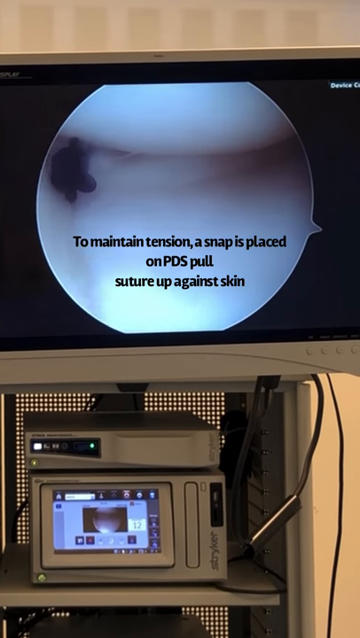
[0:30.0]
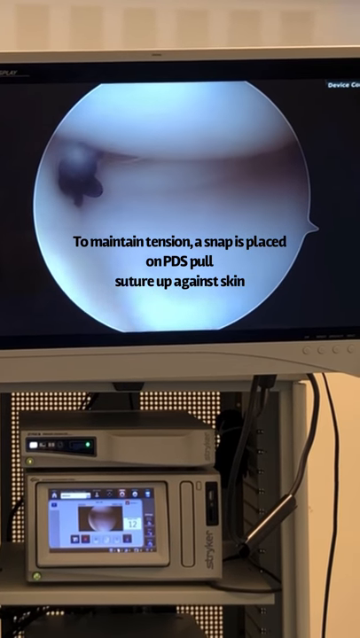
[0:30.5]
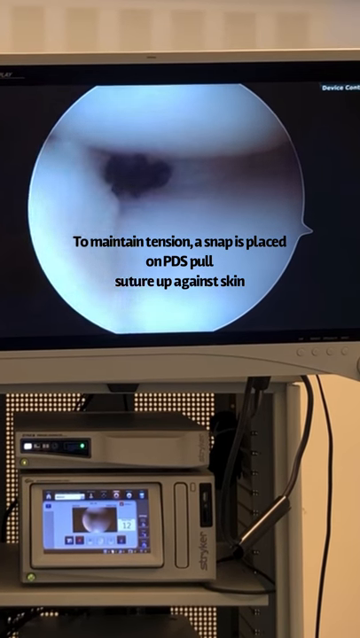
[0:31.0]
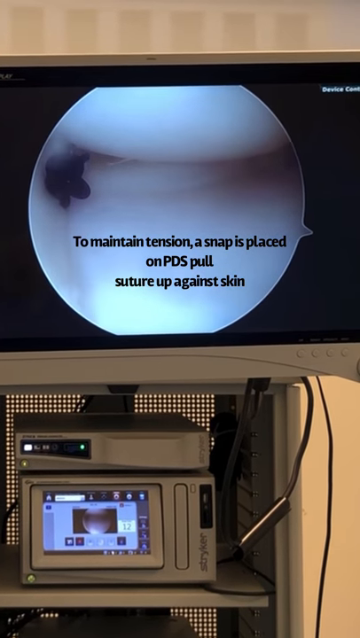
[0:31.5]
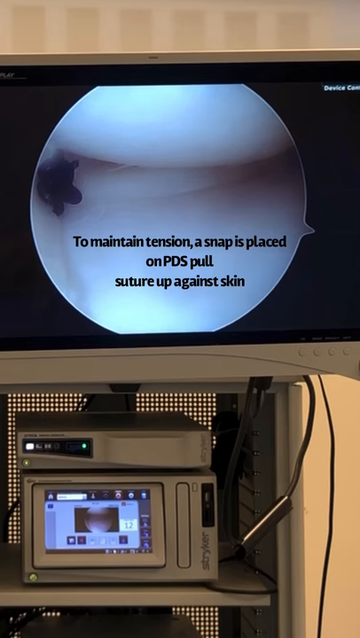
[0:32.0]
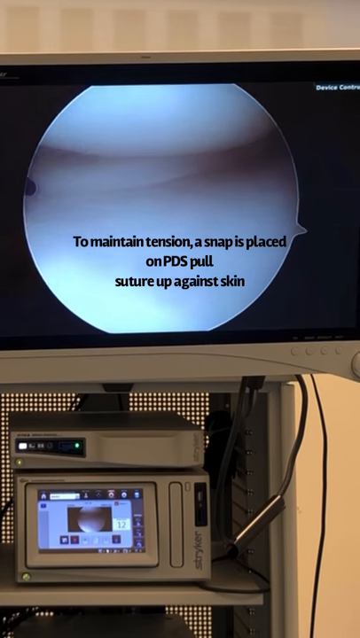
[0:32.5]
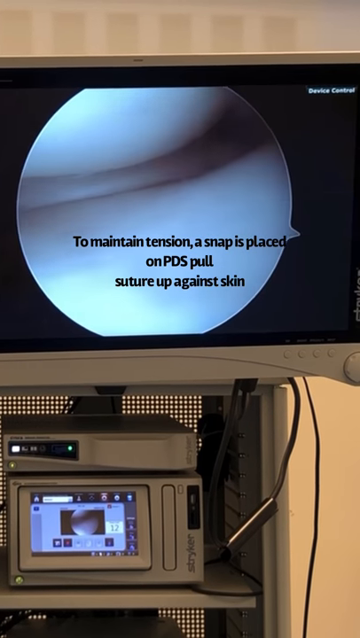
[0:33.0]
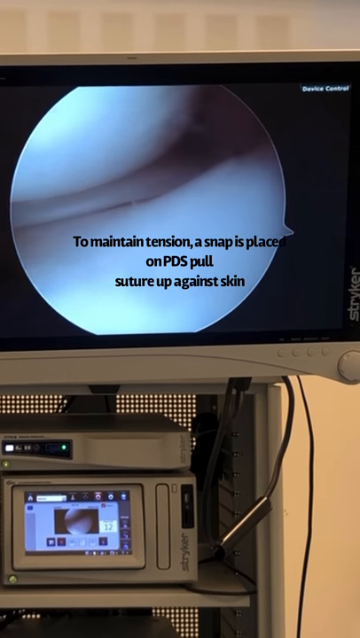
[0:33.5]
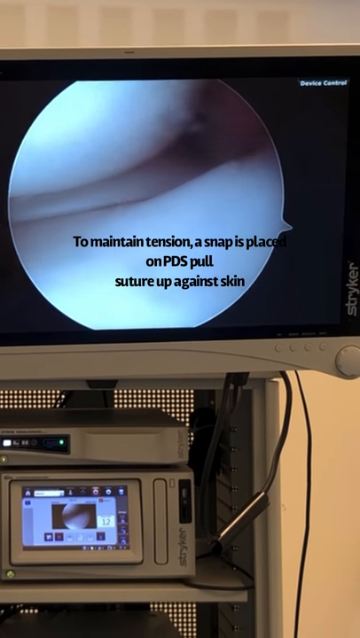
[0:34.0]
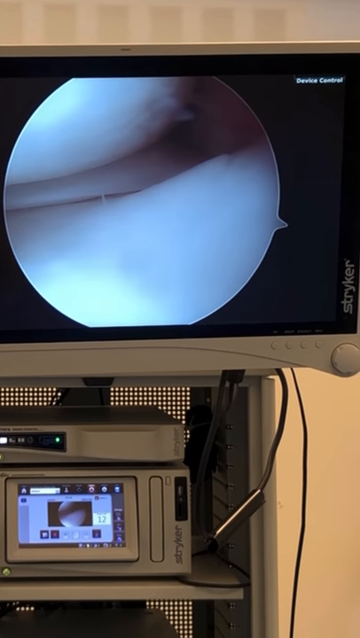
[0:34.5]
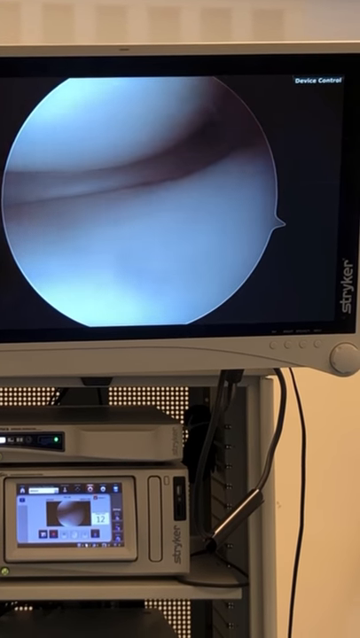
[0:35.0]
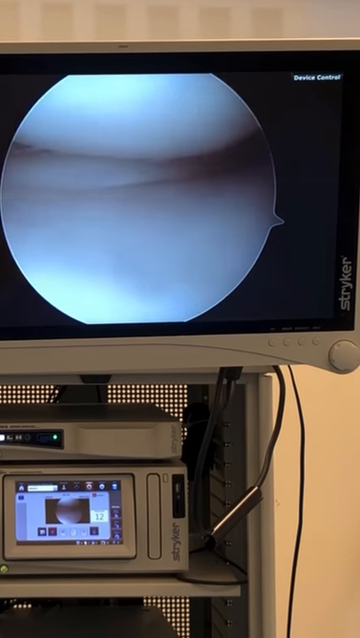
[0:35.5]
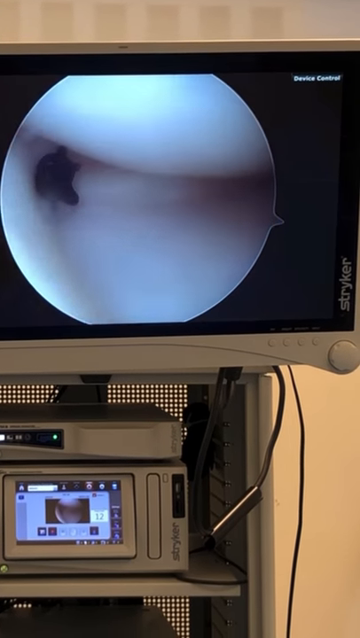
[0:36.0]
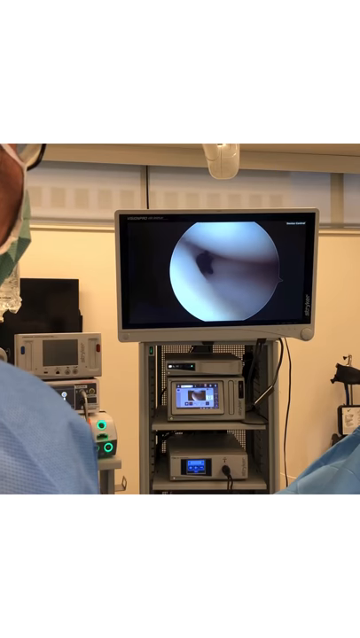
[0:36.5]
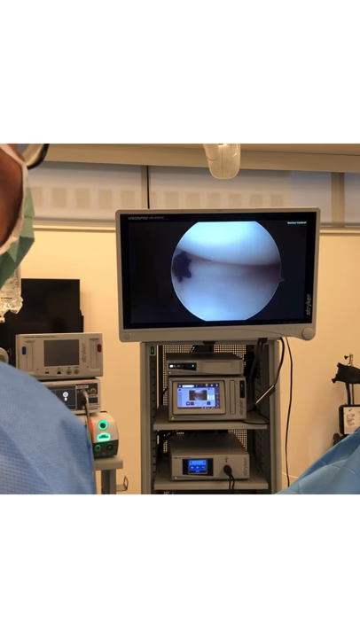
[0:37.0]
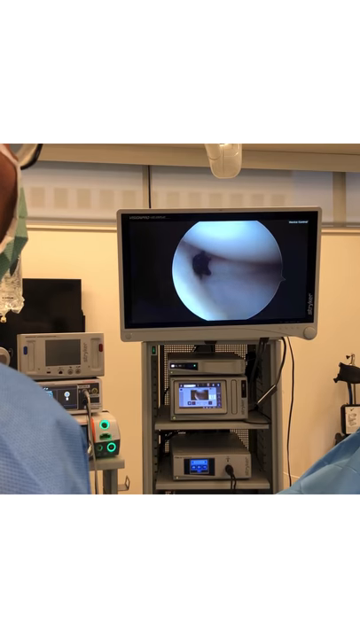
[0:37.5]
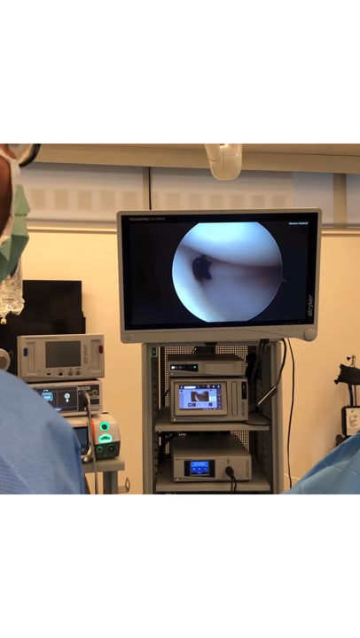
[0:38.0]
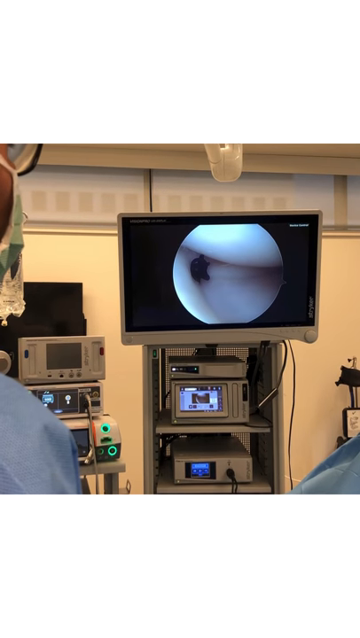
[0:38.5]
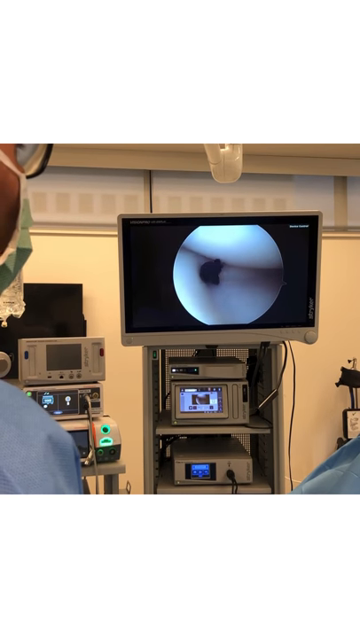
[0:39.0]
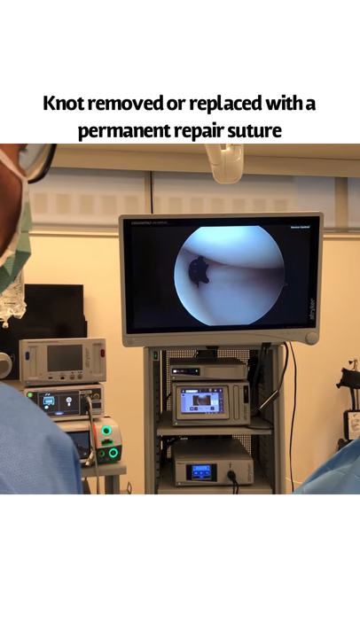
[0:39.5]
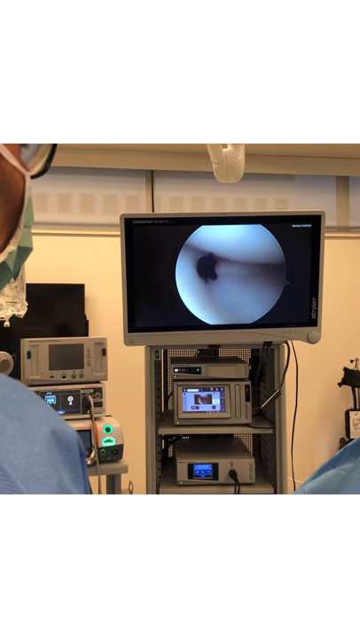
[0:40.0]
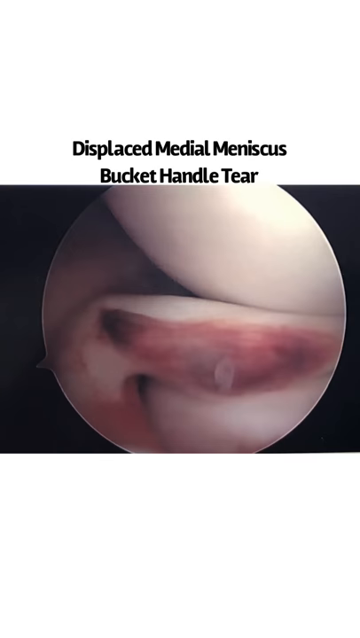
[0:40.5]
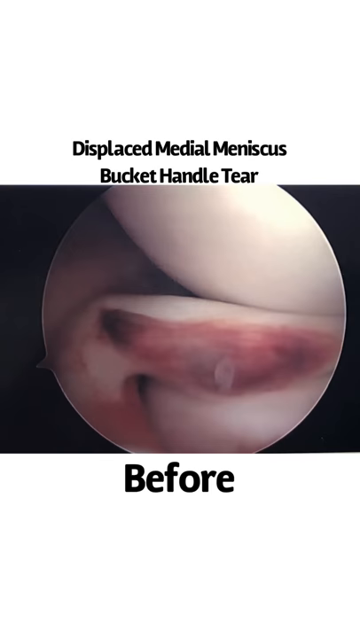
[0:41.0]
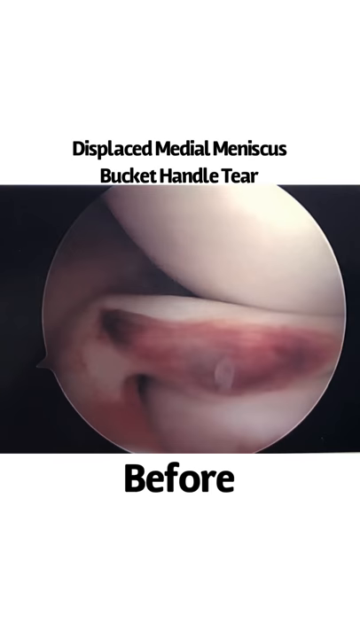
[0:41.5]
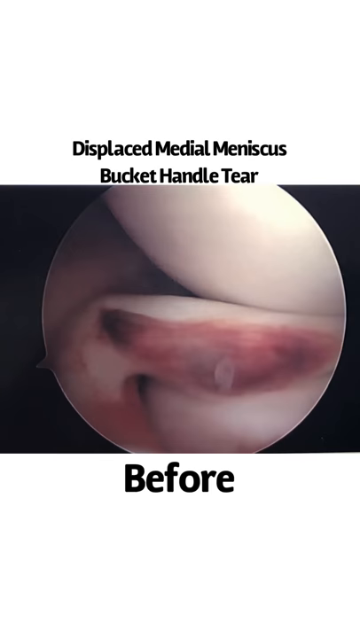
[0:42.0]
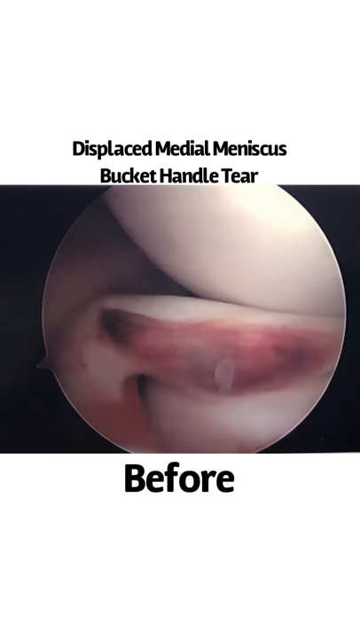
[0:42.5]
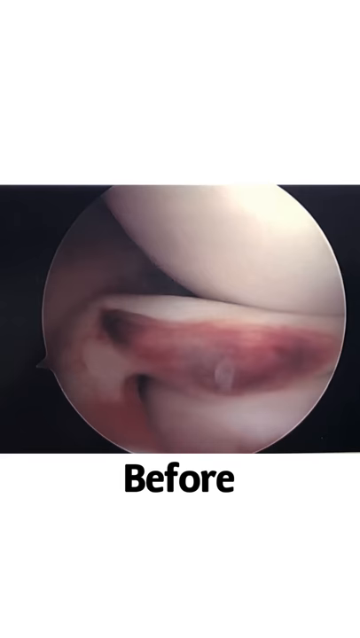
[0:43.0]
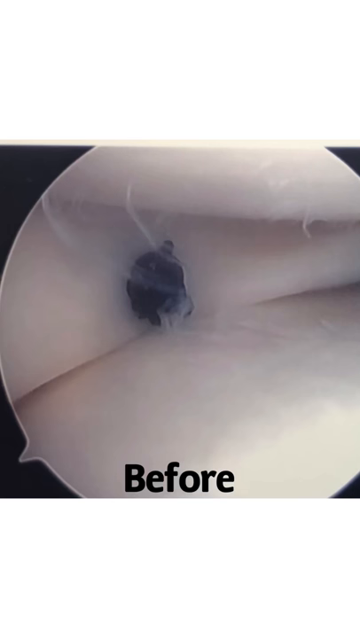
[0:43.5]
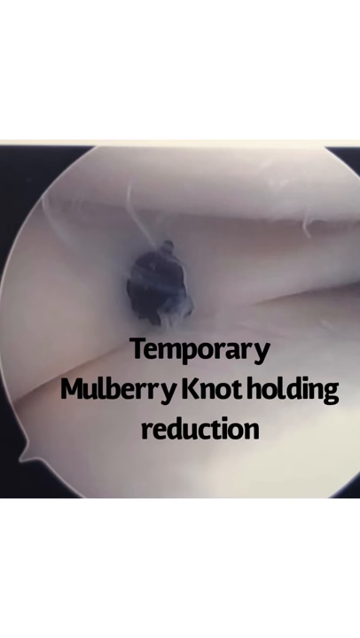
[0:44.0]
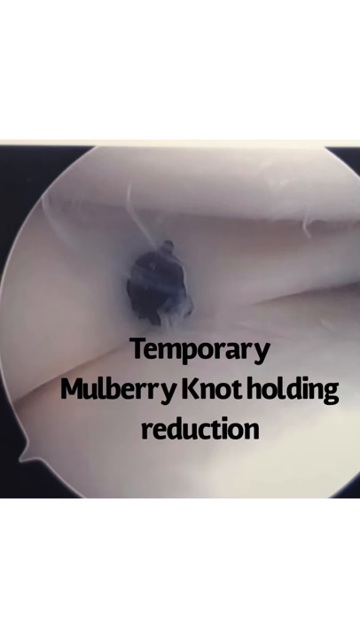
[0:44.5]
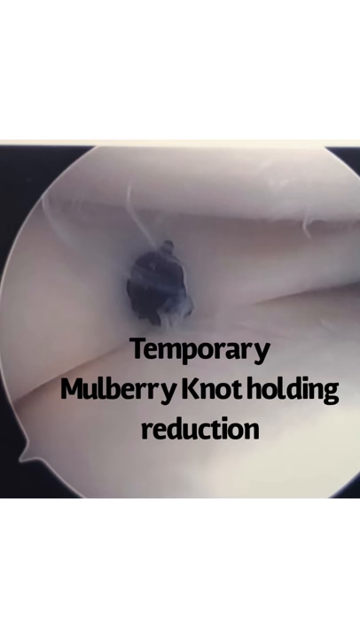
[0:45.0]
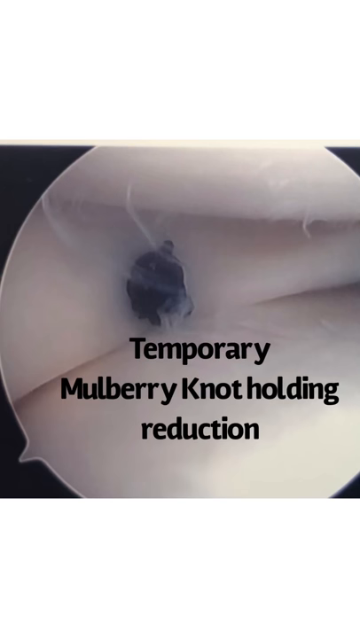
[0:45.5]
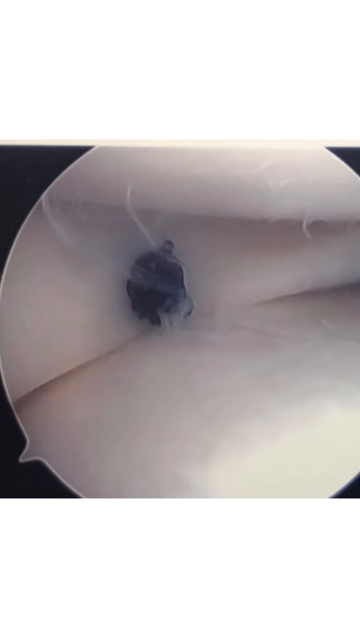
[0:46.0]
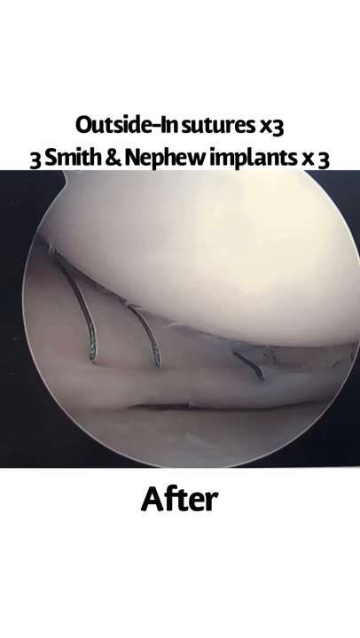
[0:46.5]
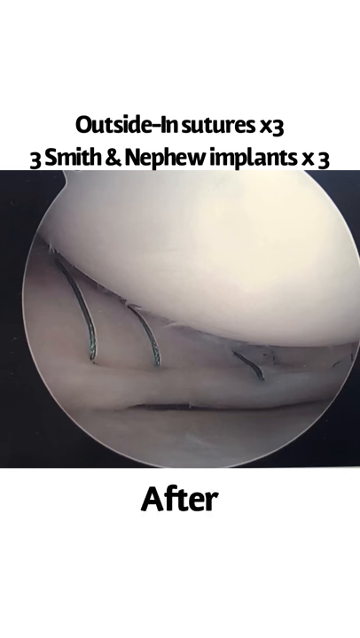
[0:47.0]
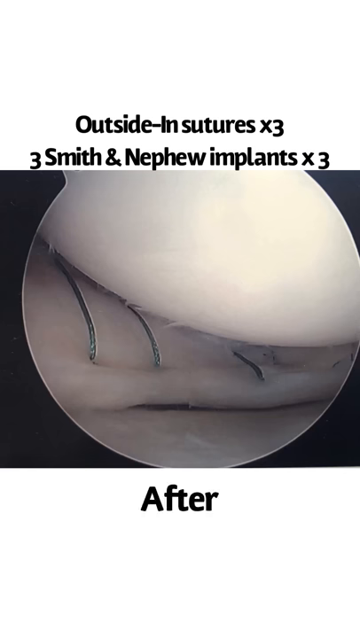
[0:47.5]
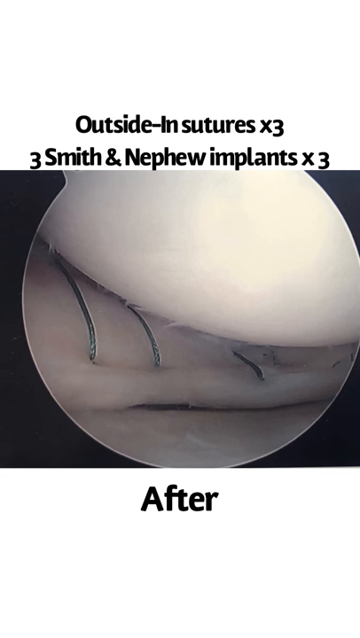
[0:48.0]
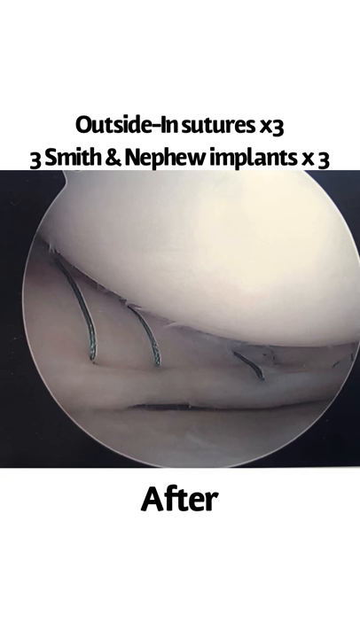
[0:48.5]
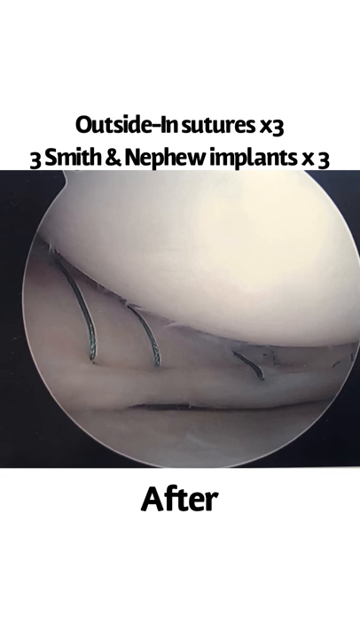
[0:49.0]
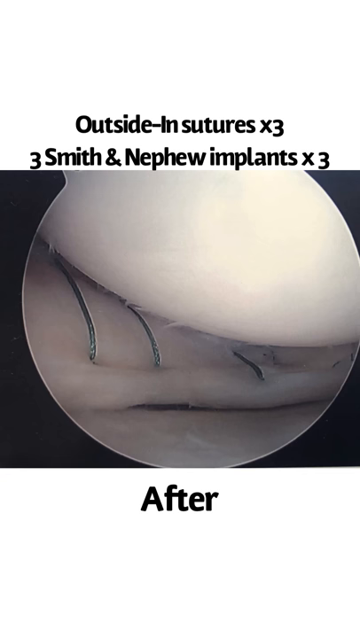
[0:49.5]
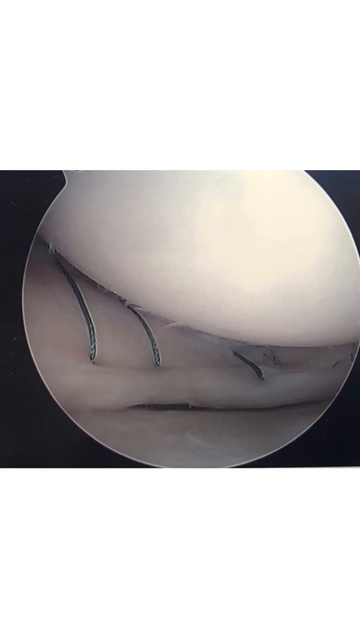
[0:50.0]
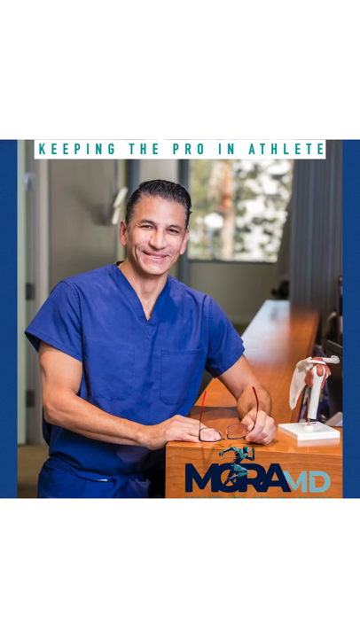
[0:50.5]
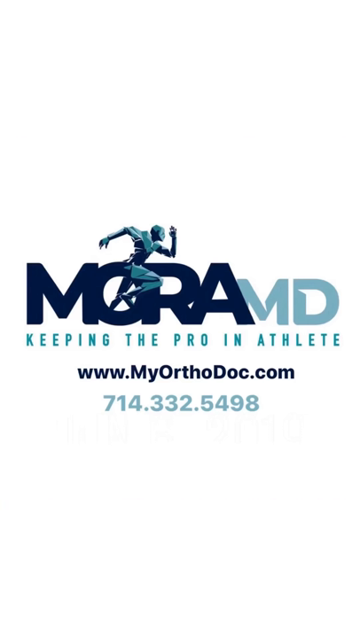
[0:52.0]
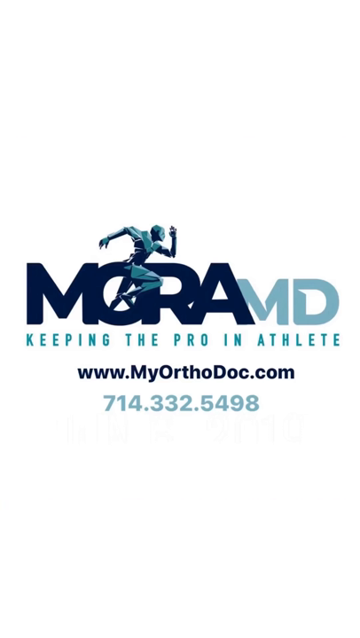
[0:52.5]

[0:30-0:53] The camera is zoomed in on a computer monitor in an operating room showing the operation in progress: two white masses with a large bundle of thread being pulled against them. Text on the screen reads "to maintain tension, a snap is placed on PDS pull suture up against skin." The bundle of thread is pulled again and again until it is snug, apparently against skin. The camera pulls out from the monitor to show a man in blue surgical scrubs with a hairnet and face mask, who appears to be talking through the mask as he performs the operation. Text then appears on the screen reading "not removed or replaced with a permanent repair structure." Next comes a photo of a heavily torn internal muscle with text reading "displays medial meniscus, bucket handle tear" and "before" beneath the picture. A new picture of the same area follows with text reading "temporary mulberry knot holding reduction," showing a black bundle of thread that seems to be holding against the muscle. The display then changes to an after image labeled "after," with text above reading "outside in sutures x3, 3 smith and nephew implants x3." In it, the black bundle of thread on the white mass is gone, and instead there are multiple stitches and sutures on the white mass.